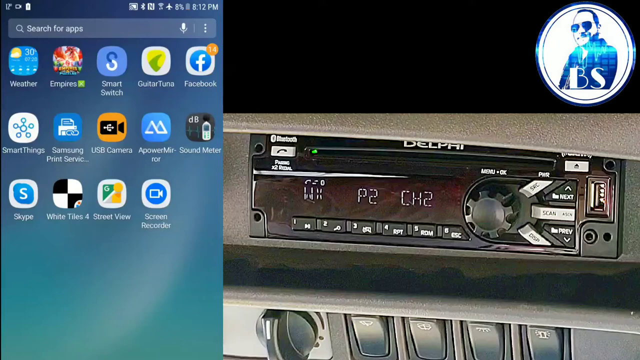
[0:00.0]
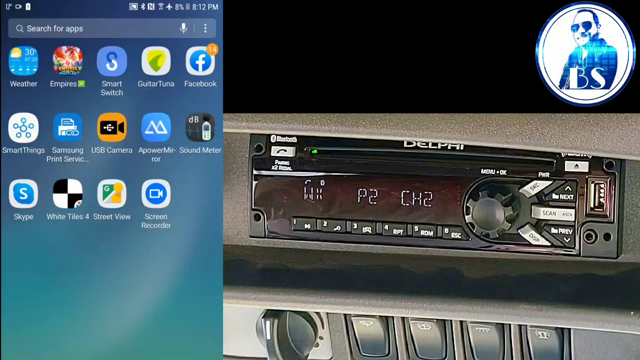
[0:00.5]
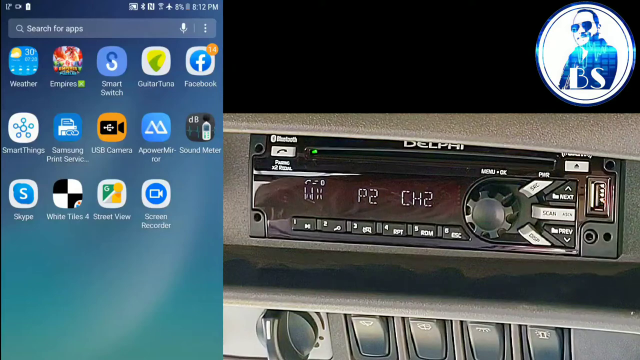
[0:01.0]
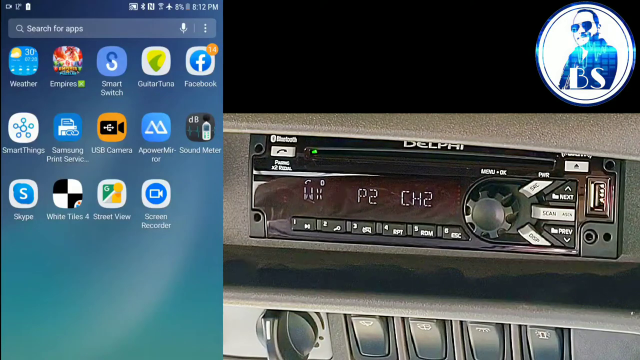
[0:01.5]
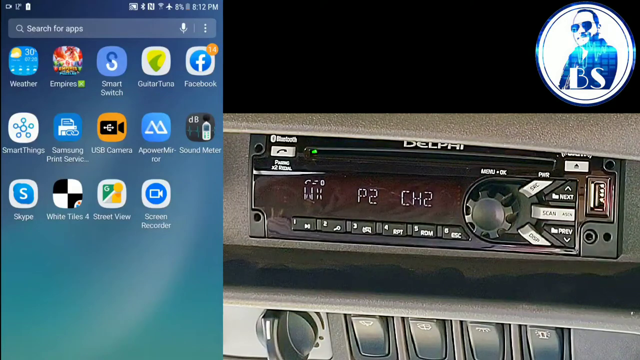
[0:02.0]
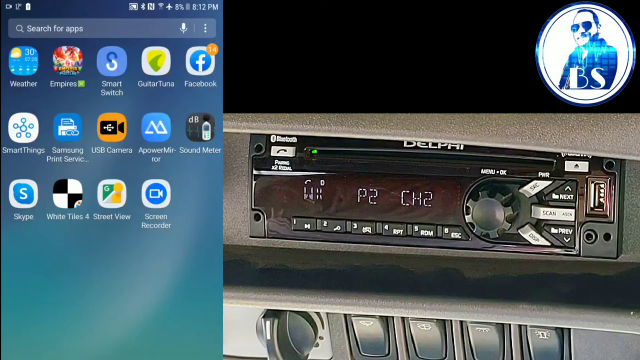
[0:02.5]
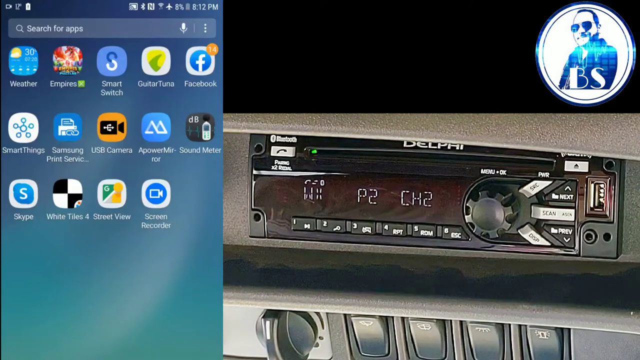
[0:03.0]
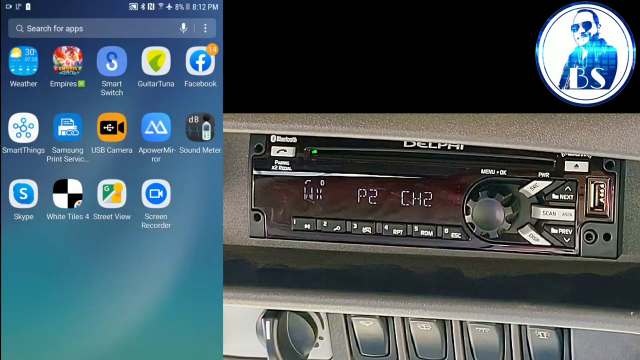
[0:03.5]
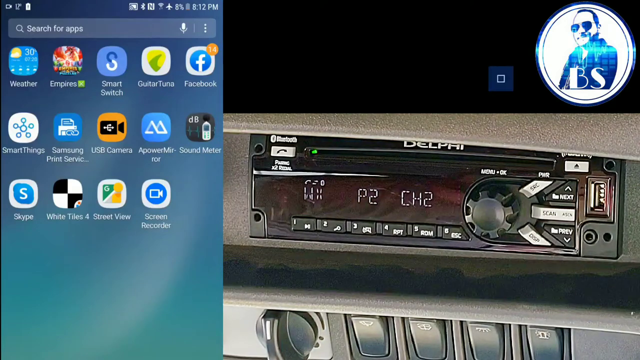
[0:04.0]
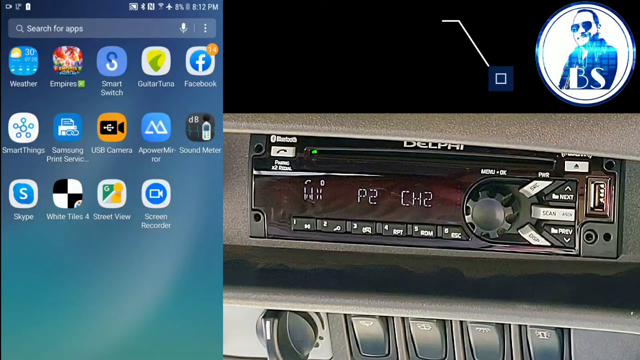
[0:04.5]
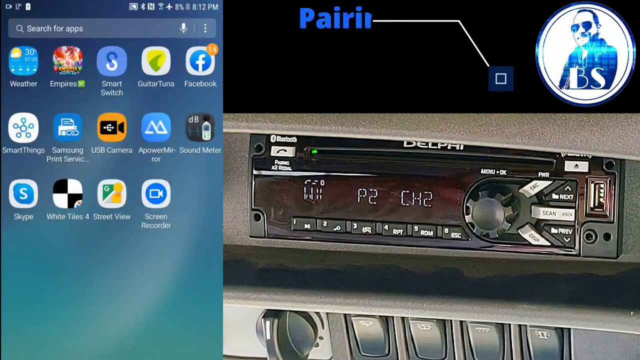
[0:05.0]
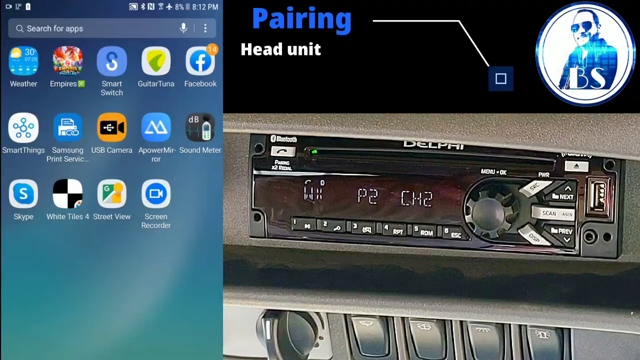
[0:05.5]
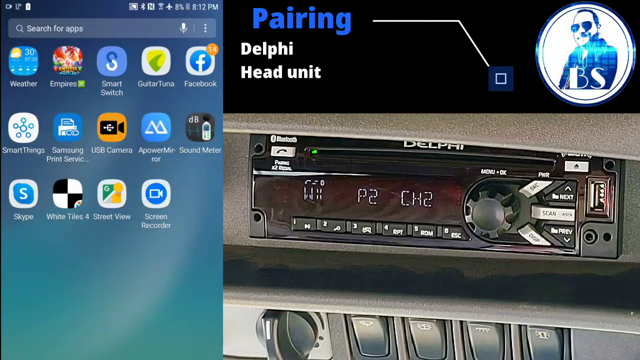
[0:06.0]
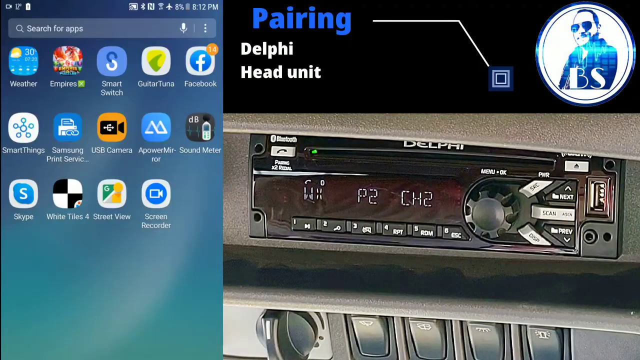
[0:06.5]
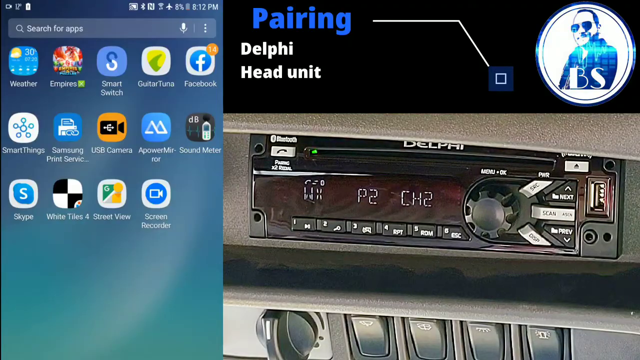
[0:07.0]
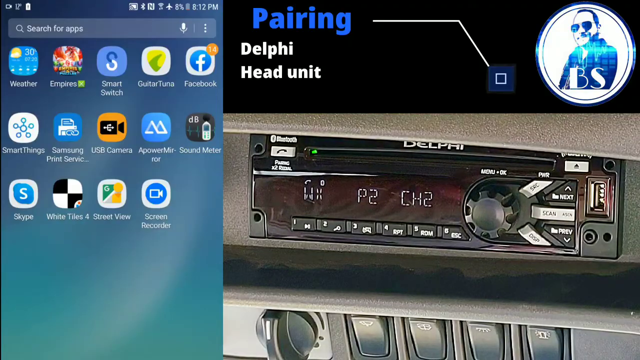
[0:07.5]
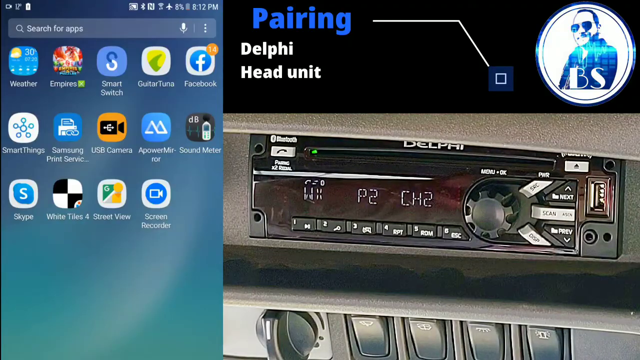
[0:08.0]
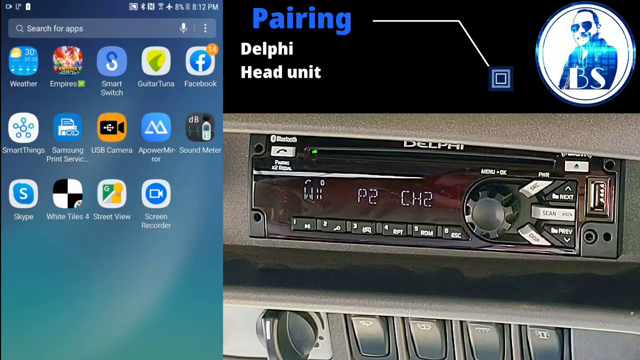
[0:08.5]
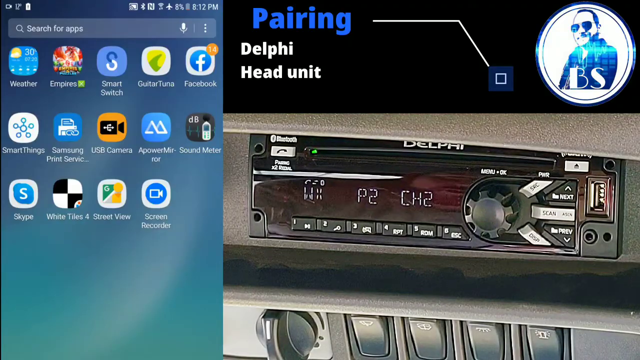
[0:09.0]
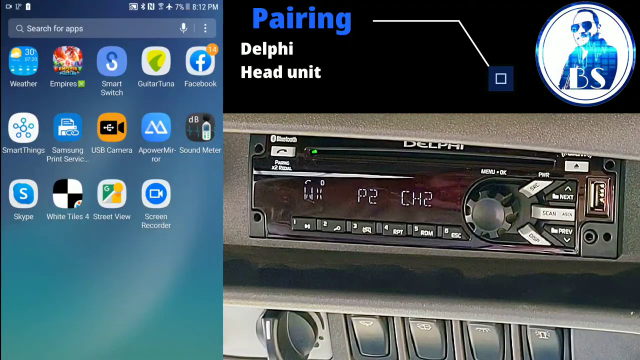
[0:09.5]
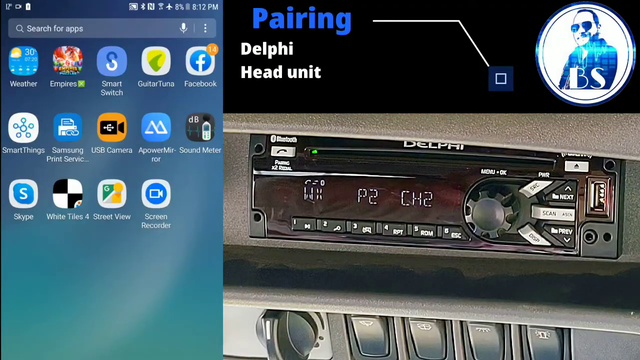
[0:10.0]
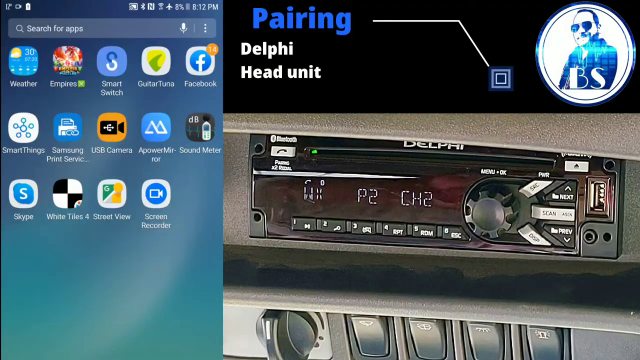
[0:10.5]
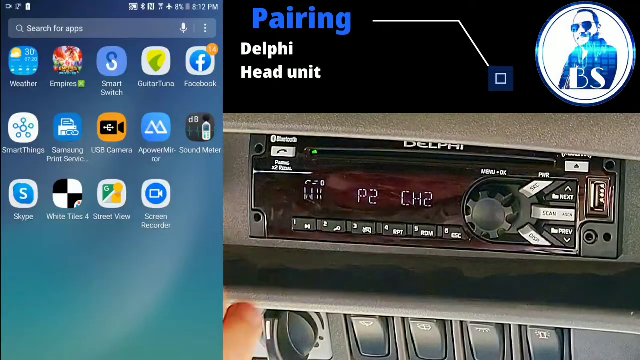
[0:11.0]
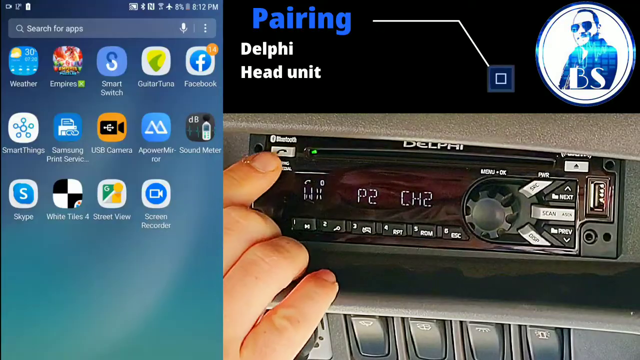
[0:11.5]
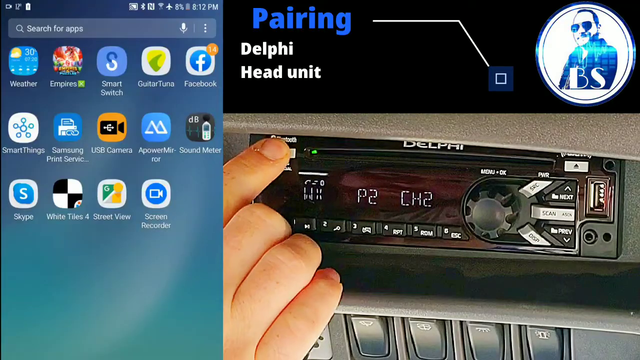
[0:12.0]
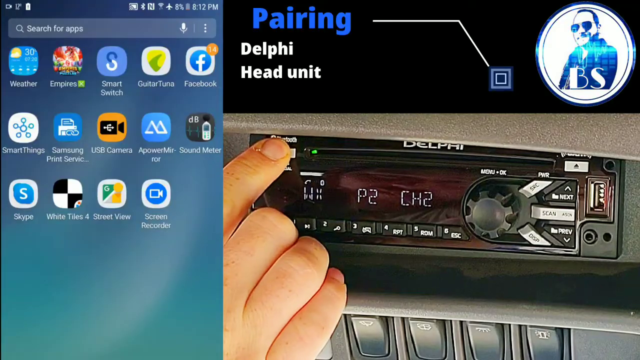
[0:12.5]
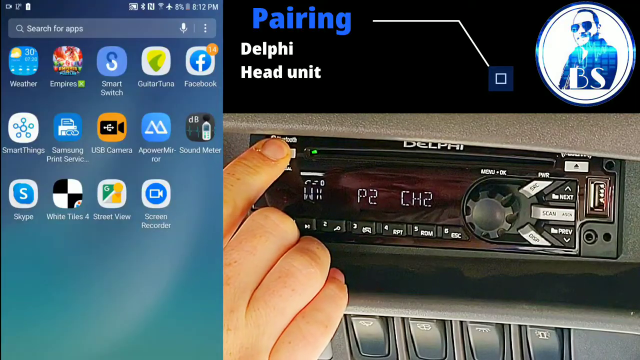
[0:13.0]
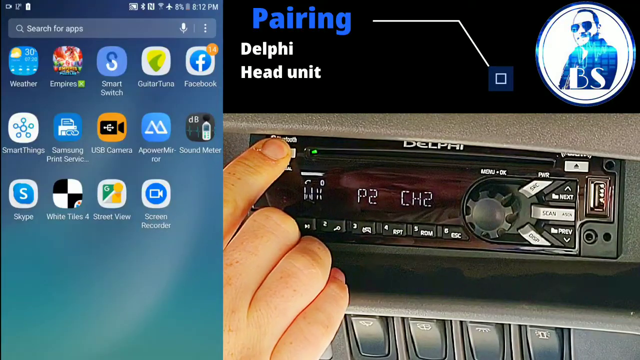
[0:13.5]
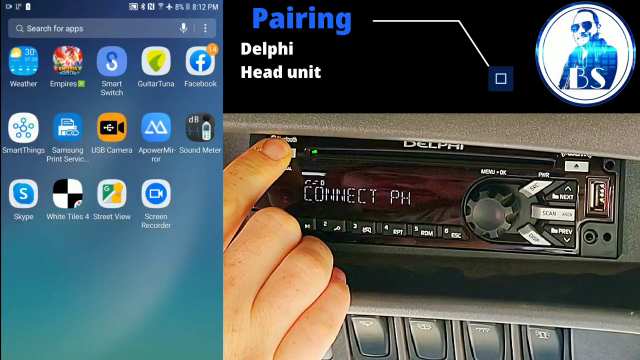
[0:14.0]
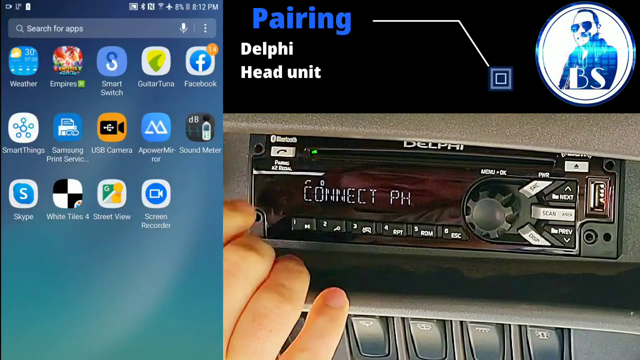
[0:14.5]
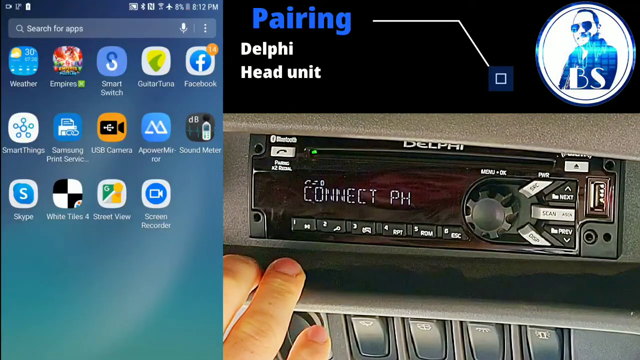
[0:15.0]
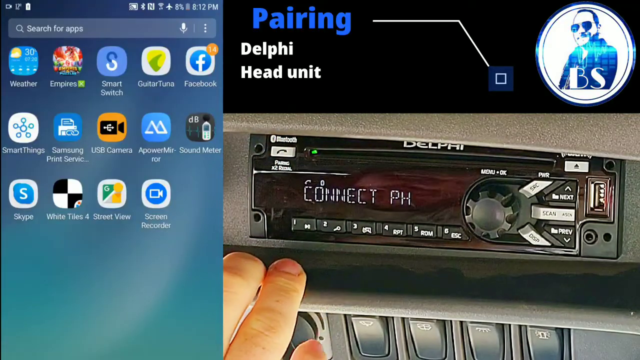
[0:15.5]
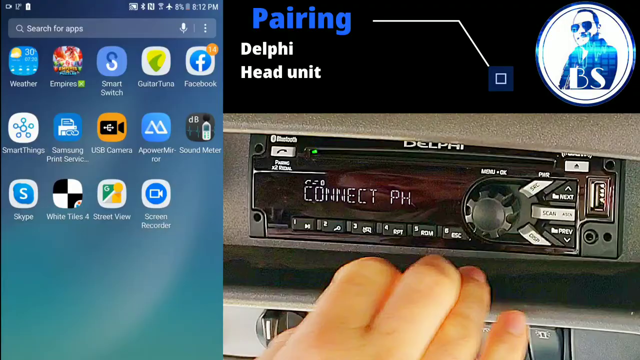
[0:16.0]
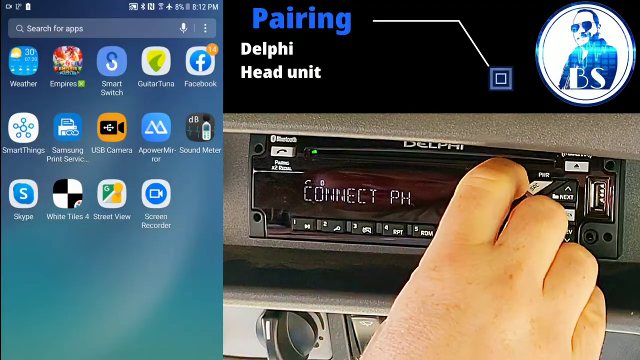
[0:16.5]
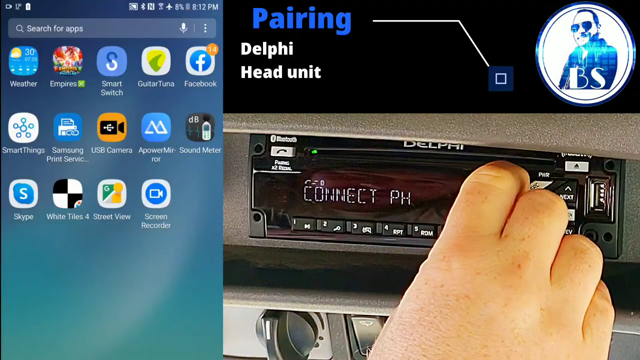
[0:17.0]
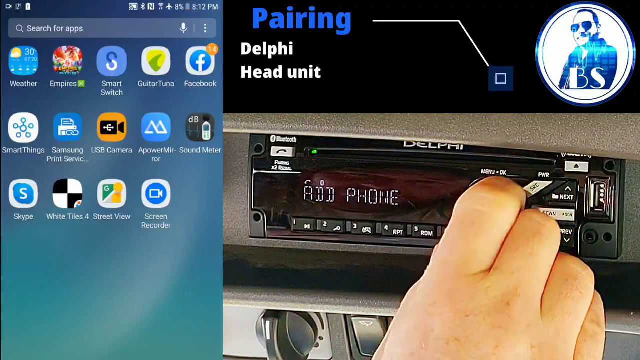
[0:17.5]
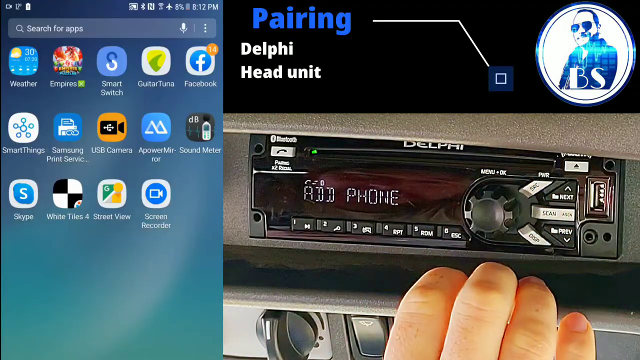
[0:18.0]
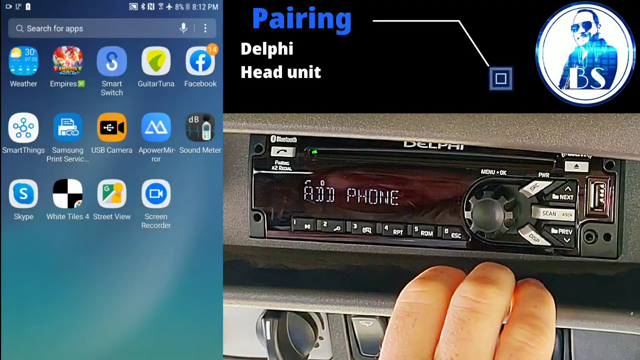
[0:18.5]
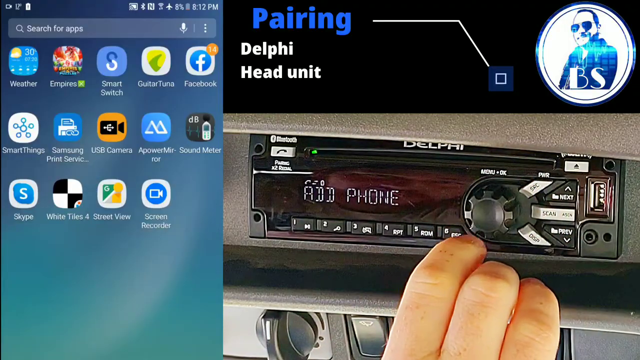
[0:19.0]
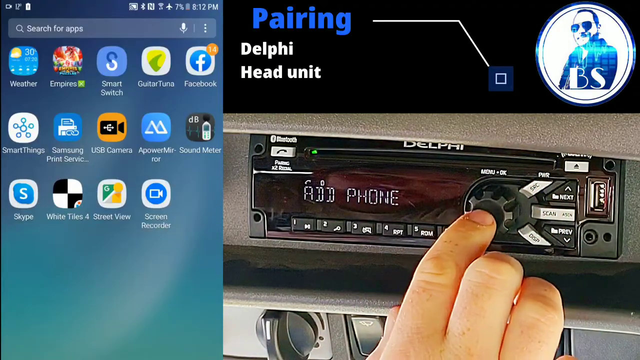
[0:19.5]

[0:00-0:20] The video is a split screen. One side shows someone's phone home screen with 14 different apps displayed as small squares, a search bar above the apps, and, in the top left-hand corner, the time, airplane mode, a battery percentage, and any open apps. The other half shows a video of a car's CD player, with multiple buttons and knobs inside someone's car. A pairing symbol appears at the top. A person presses a button, turns the dial to add phone, and pushes the button in, showing that he is trying to pair his phone to the receiver in his car. The text reads "pairing Delphi head unit", and a square animation plays while the pairing takes place.